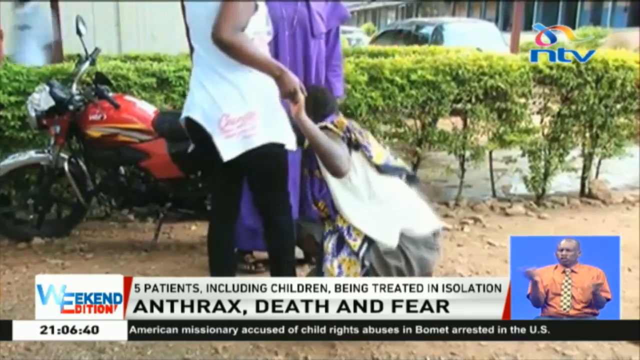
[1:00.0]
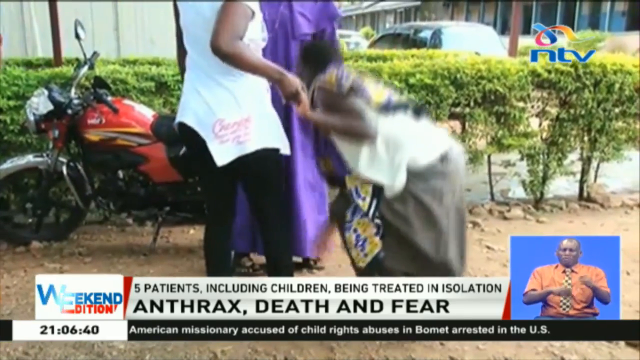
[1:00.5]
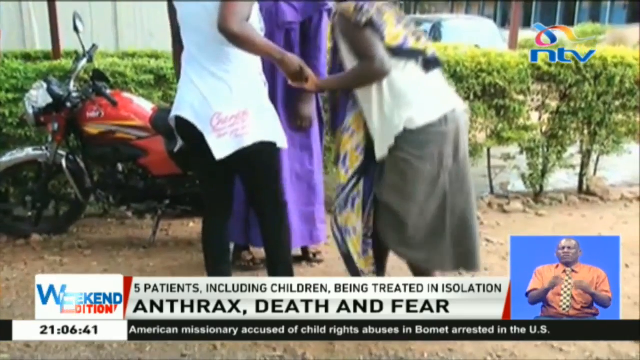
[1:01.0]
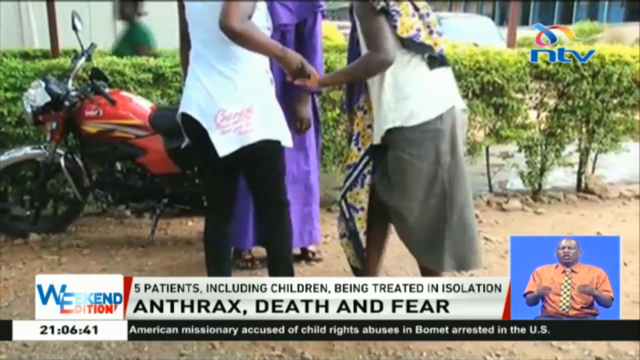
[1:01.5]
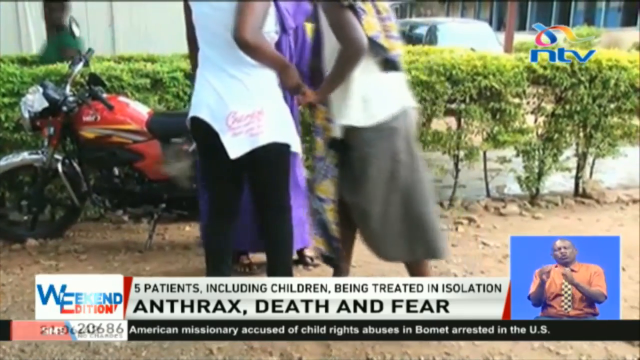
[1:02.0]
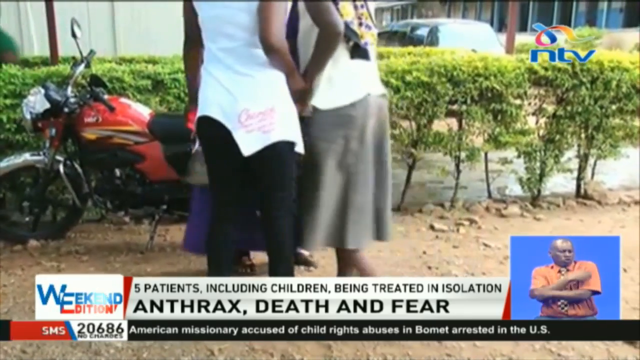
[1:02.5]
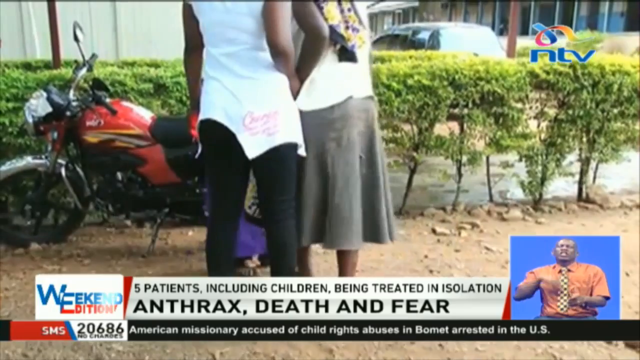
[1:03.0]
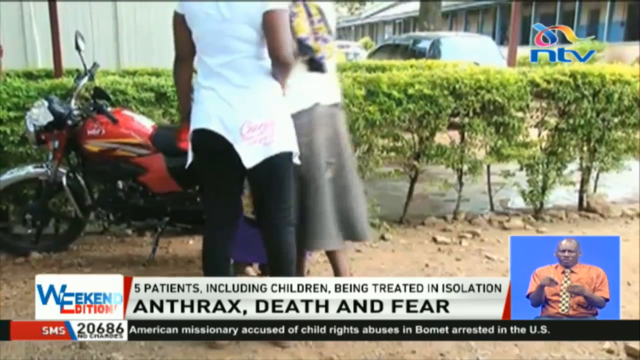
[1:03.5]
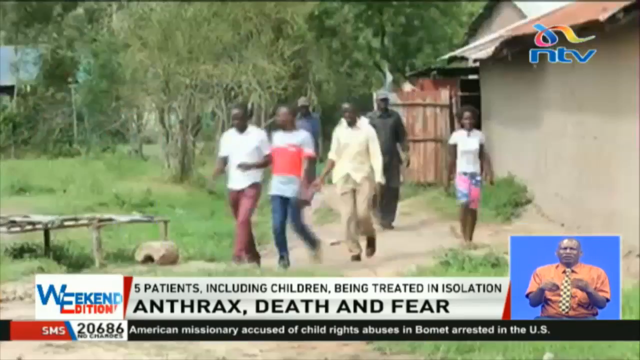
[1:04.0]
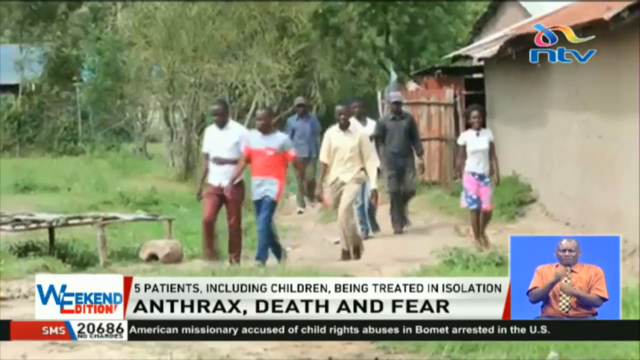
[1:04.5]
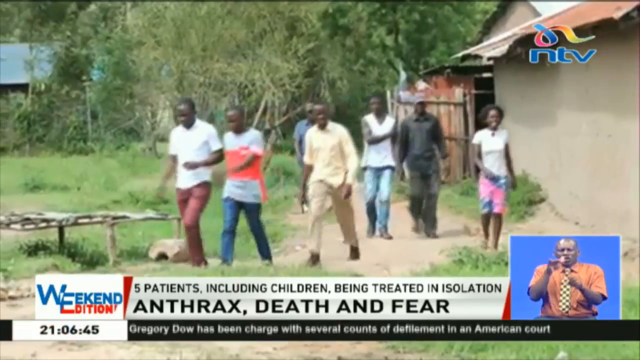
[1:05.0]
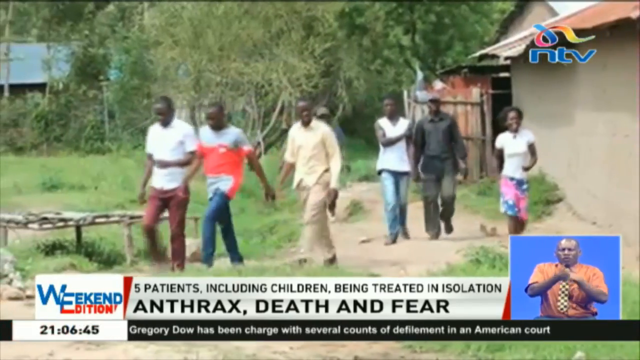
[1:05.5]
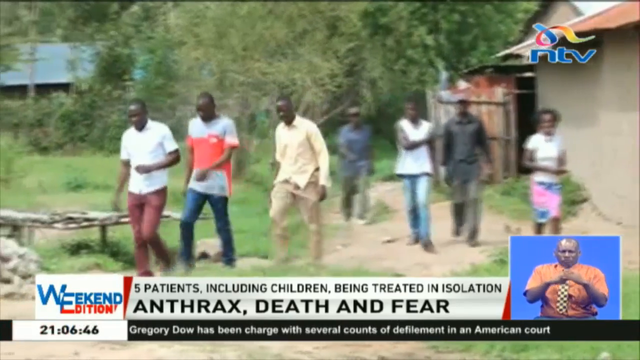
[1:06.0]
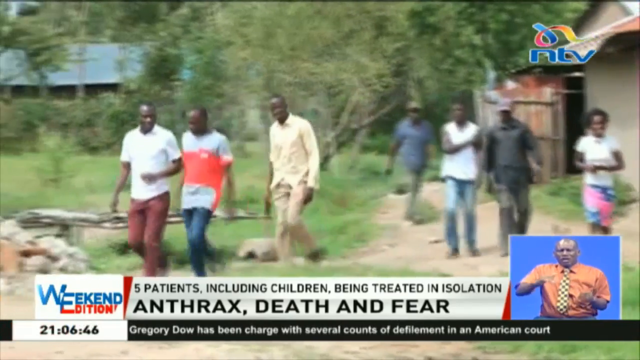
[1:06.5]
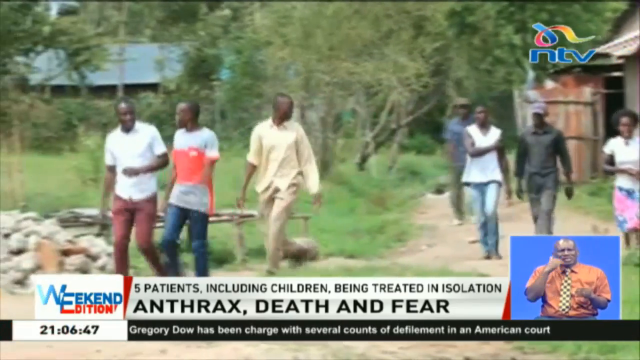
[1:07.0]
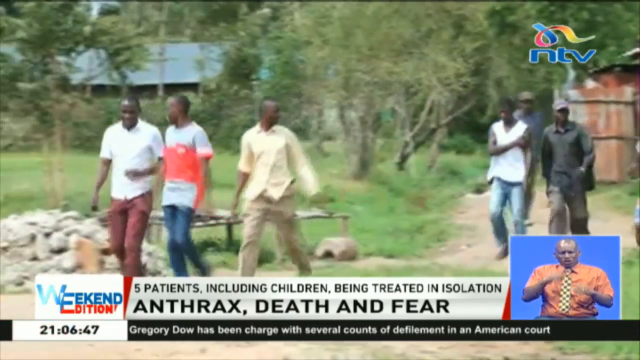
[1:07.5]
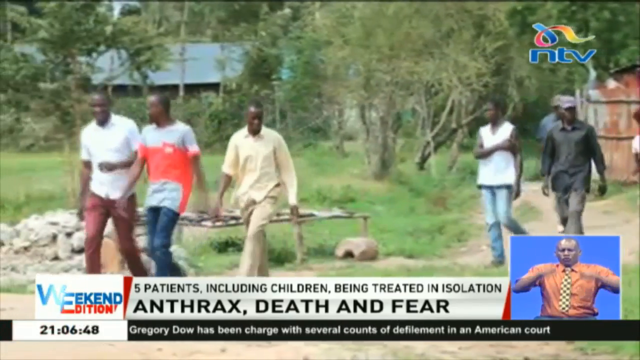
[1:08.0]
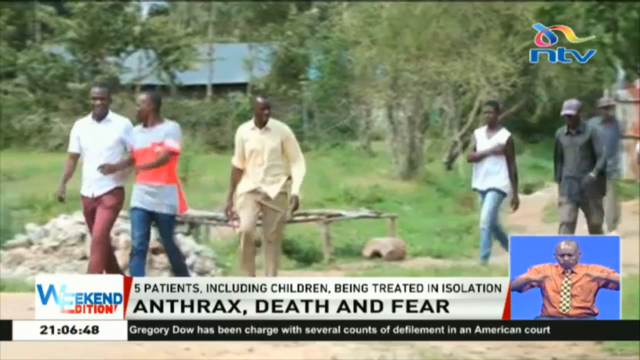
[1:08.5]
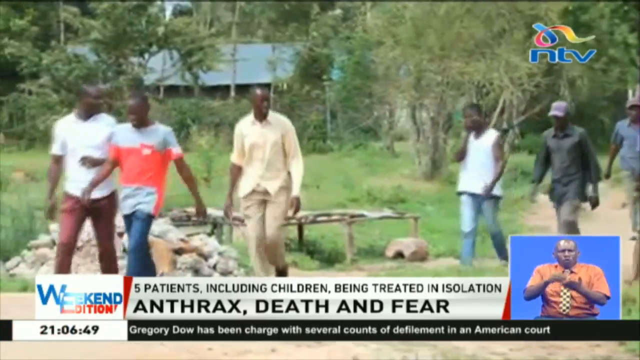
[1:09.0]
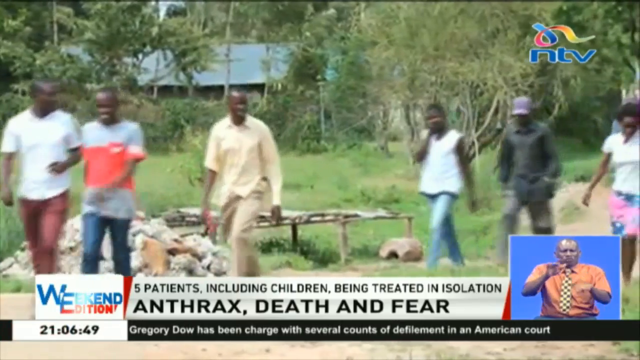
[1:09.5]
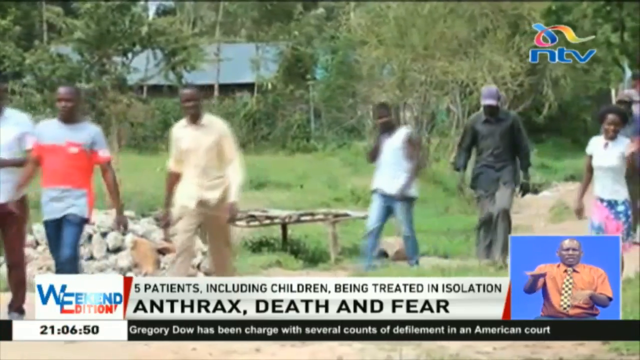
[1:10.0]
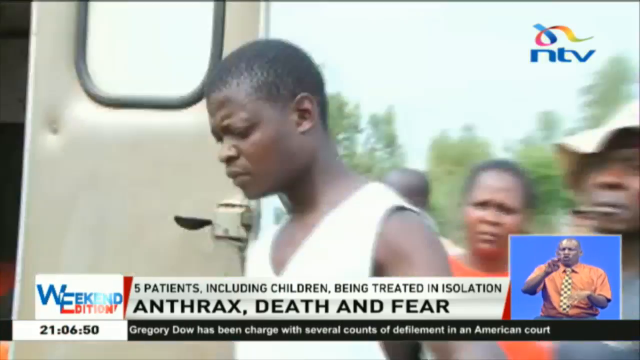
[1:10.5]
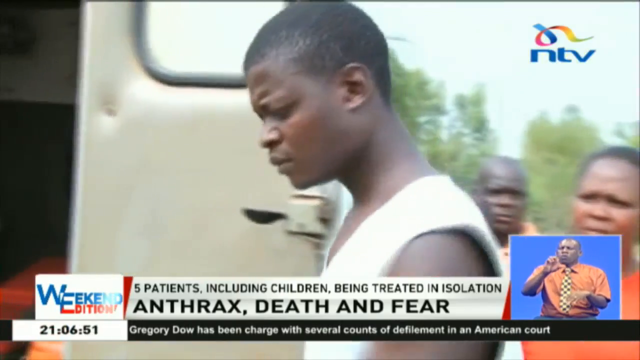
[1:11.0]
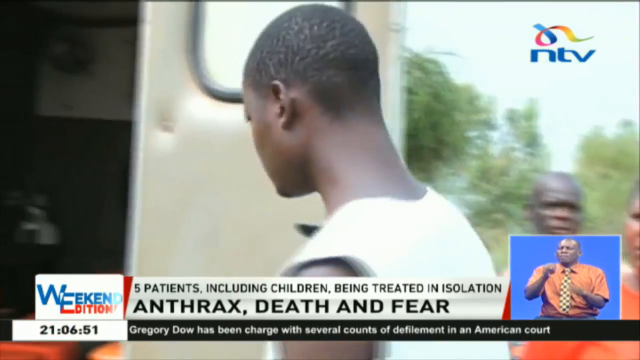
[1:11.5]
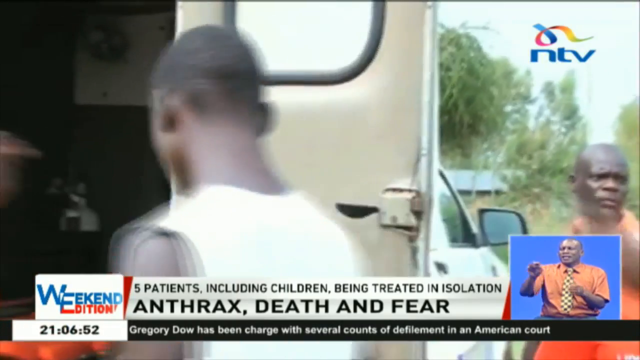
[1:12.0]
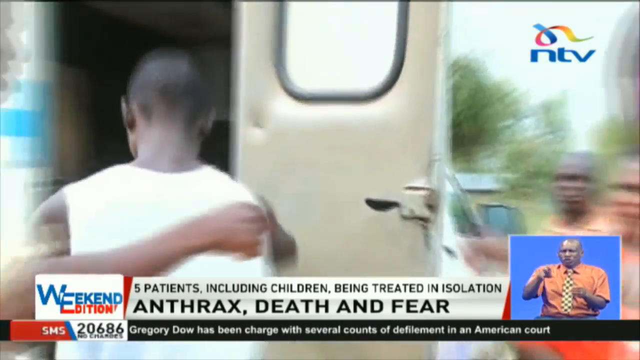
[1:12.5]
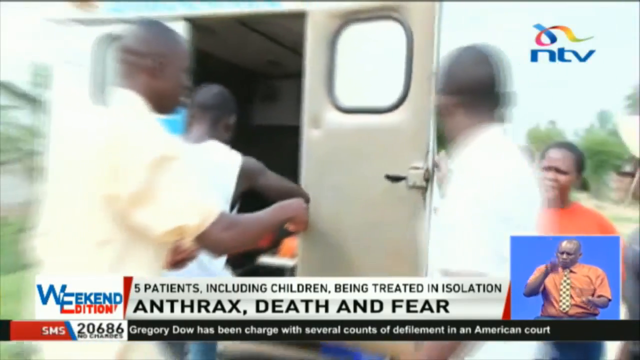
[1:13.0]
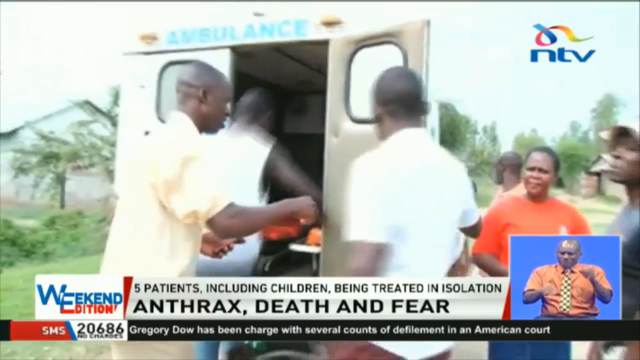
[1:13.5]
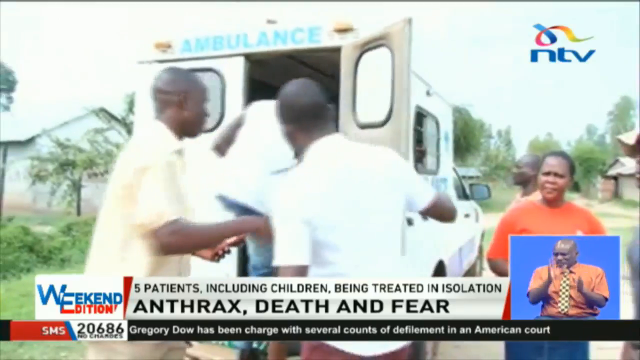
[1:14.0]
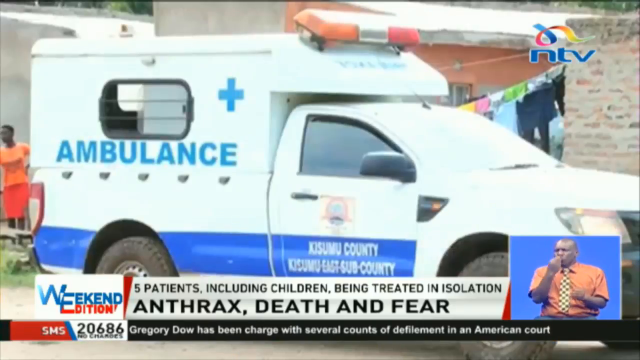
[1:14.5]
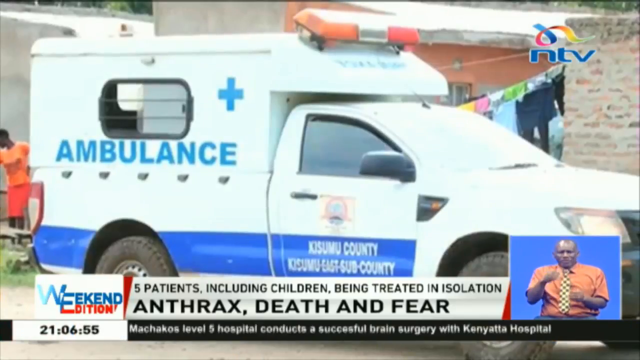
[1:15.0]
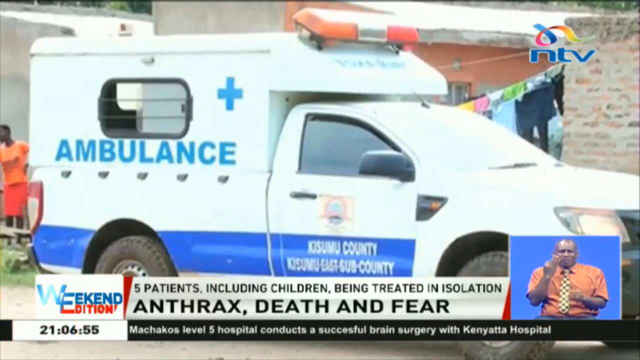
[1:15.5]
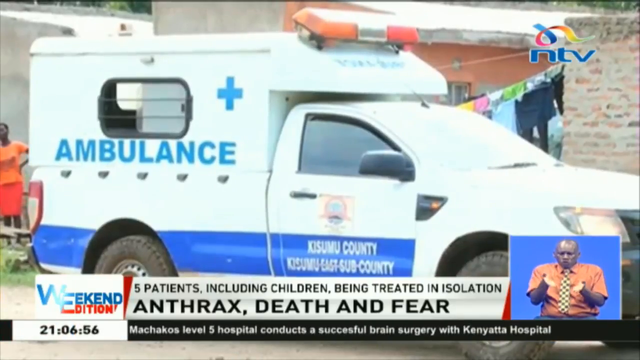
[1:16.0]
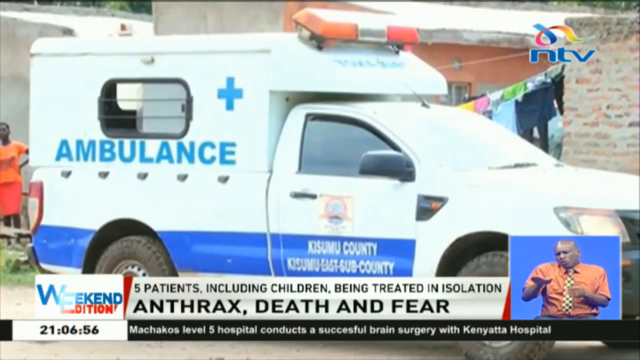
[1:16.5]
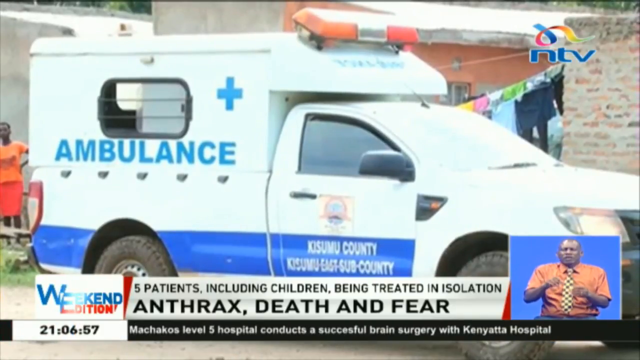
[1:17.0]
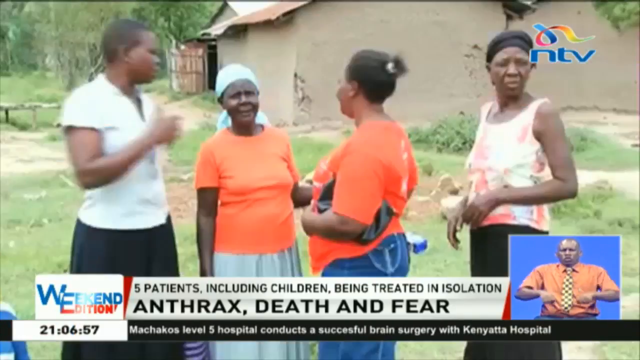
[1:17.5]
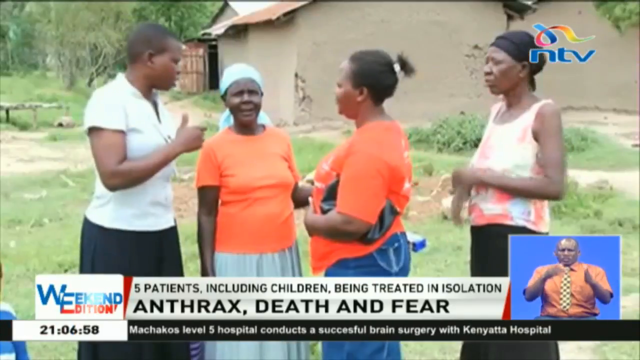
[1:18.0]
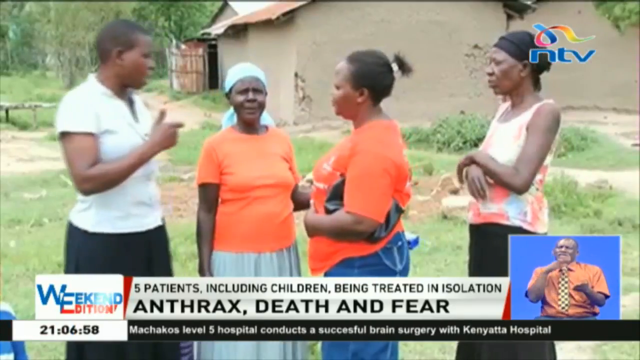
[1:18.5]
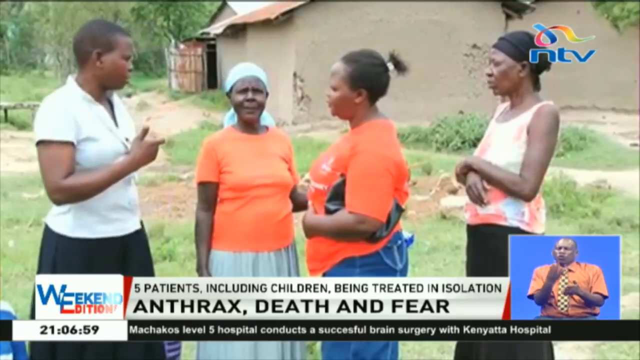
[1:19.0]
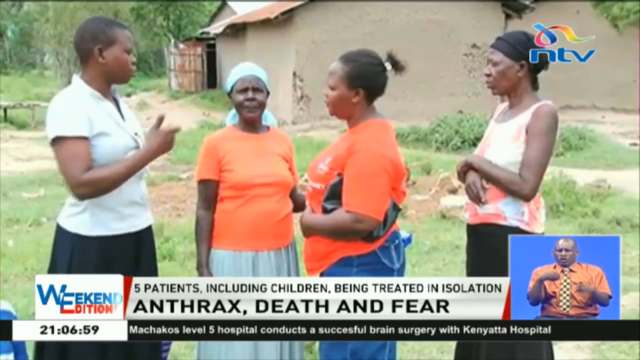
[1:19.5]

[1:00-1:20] Three African women are standing outside next to green hedges and a red motorcycle; one woman is sort of sitting on the ground and the others are helping her. A path follows, with a small tan-colored building on the right, as a group of about five men and one woman walk down it. A close-up shows a man in a sleeveless white shirt getting into the back of a white ambulance. A side shot shows the small white ambulance, which says "ambulance" on the side with a blue cross, with kind of a blue streak along the bottom across the length of the vehicle; the passenger door reads "Kisumu County, Kisumu East Sub-County". Then four older women stand outside what looks like a small tan-colored house; they seem to be gathered in a group, talking.